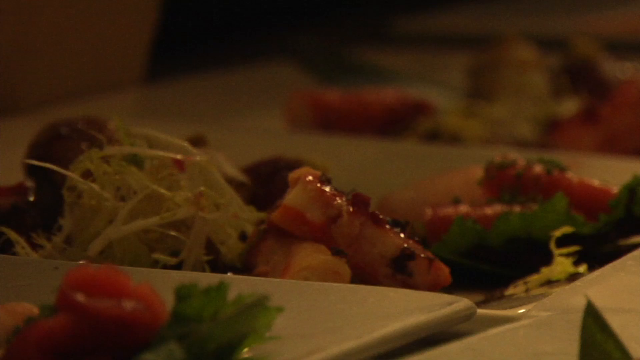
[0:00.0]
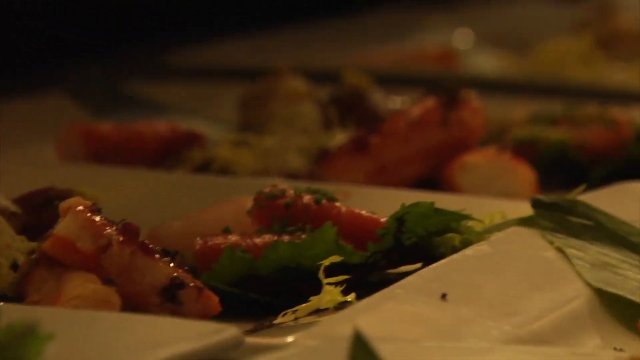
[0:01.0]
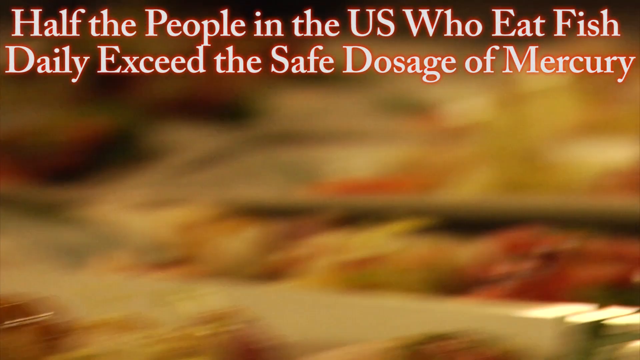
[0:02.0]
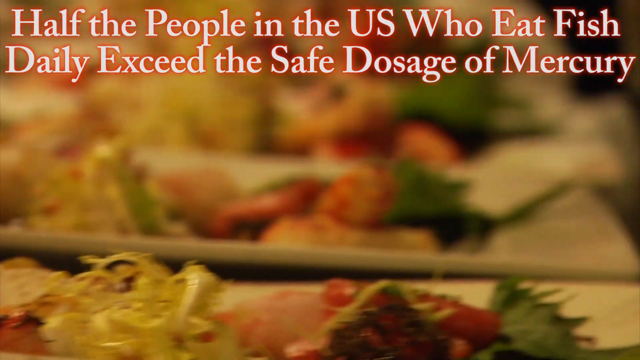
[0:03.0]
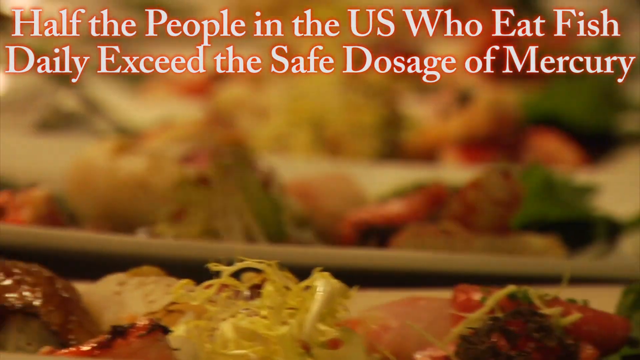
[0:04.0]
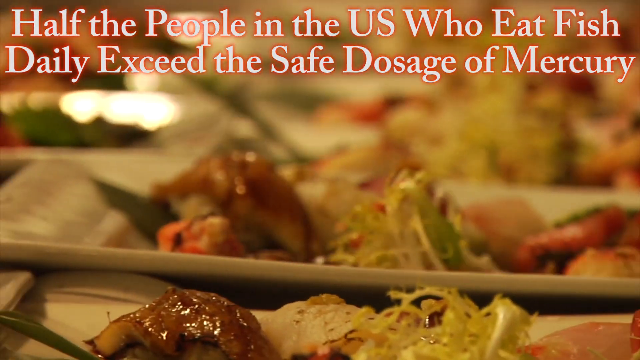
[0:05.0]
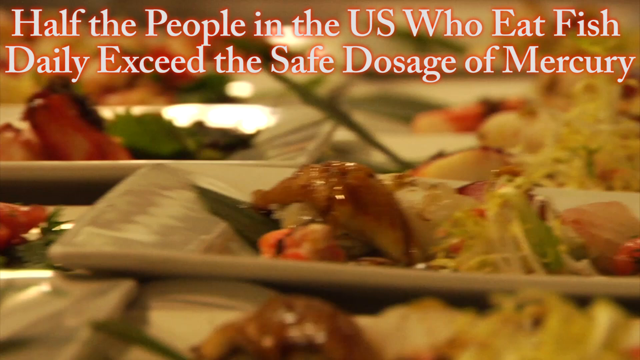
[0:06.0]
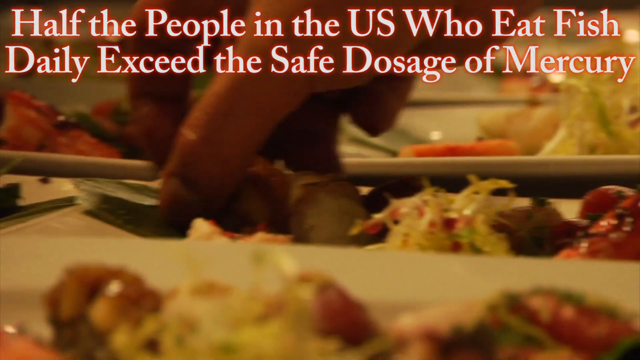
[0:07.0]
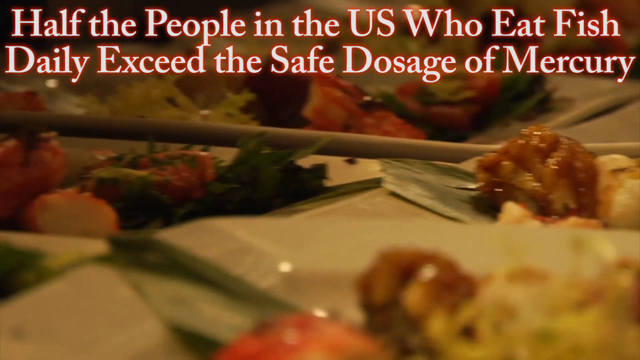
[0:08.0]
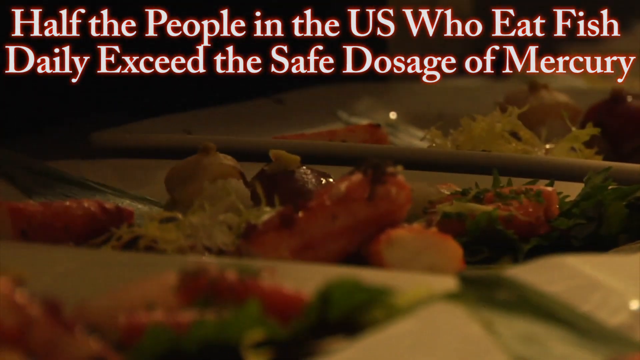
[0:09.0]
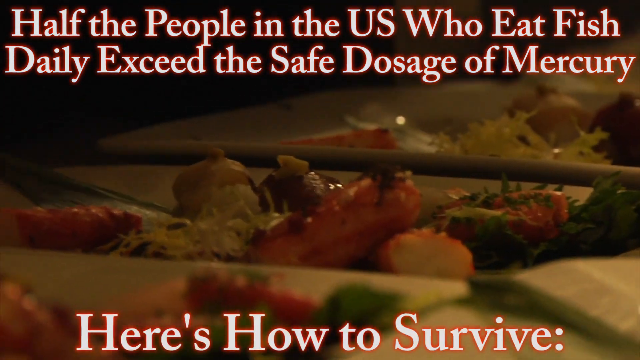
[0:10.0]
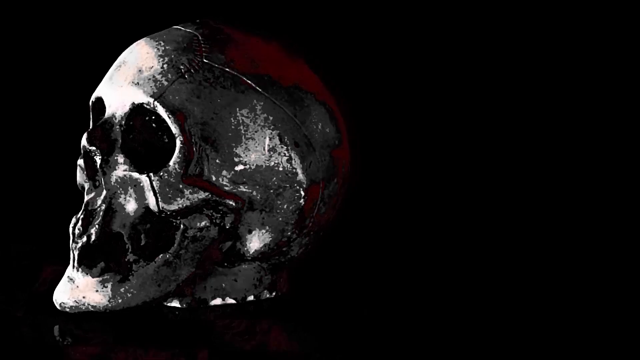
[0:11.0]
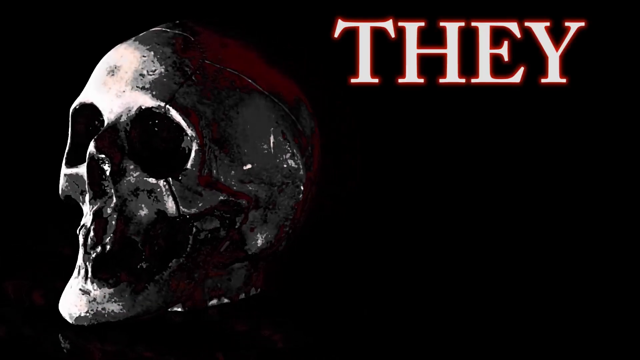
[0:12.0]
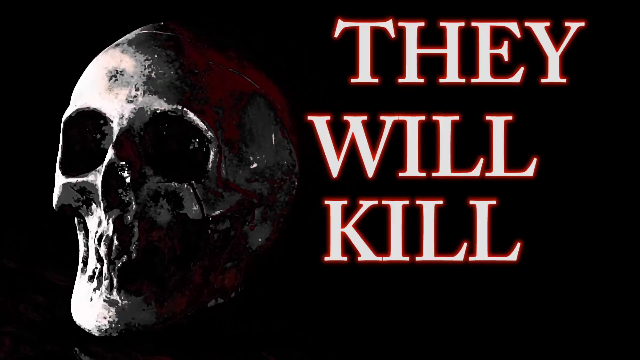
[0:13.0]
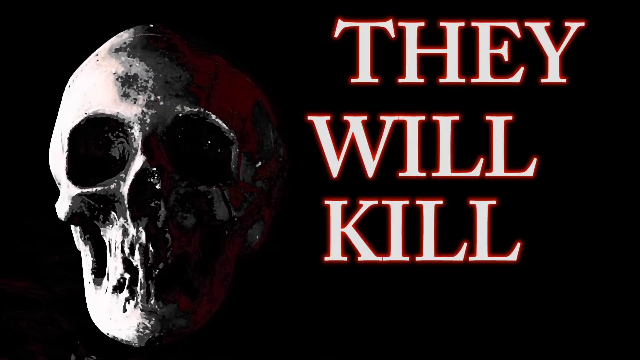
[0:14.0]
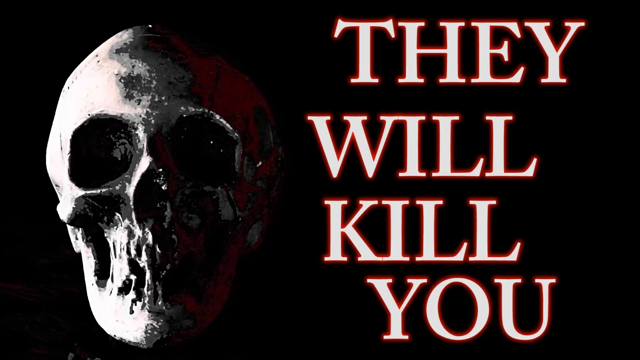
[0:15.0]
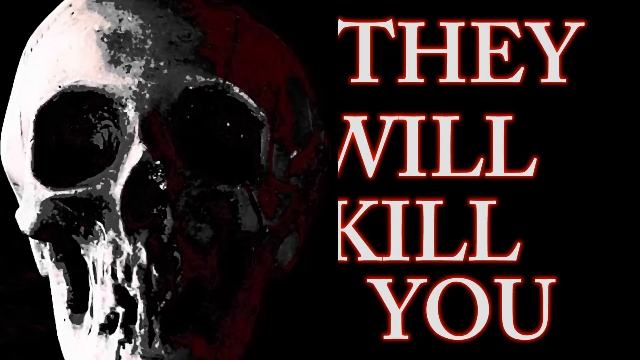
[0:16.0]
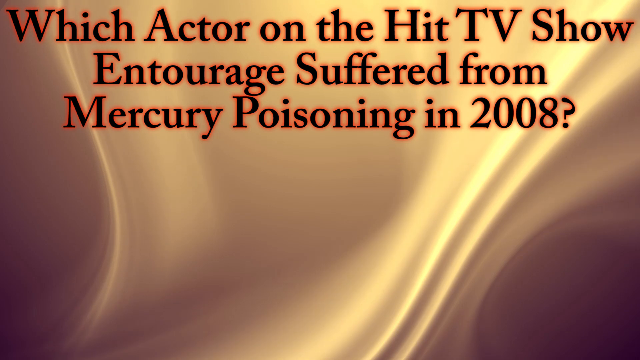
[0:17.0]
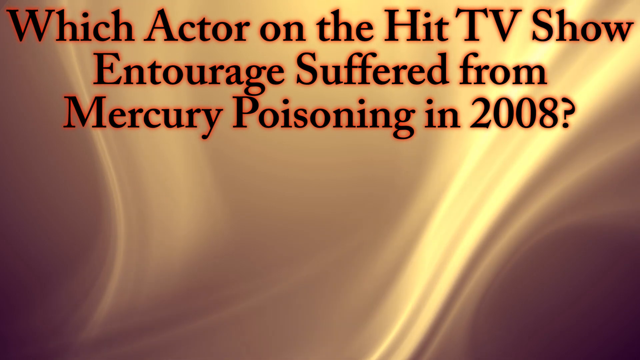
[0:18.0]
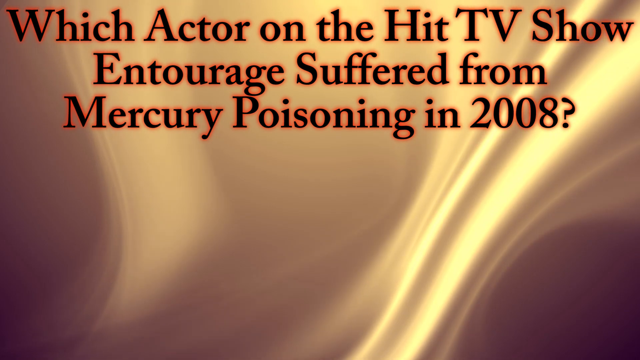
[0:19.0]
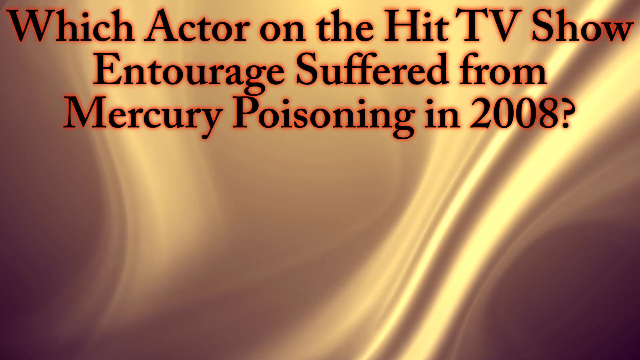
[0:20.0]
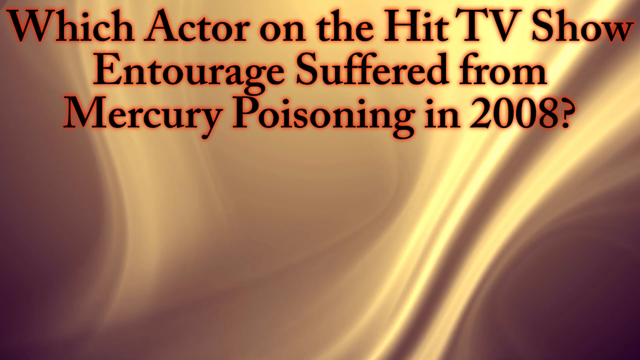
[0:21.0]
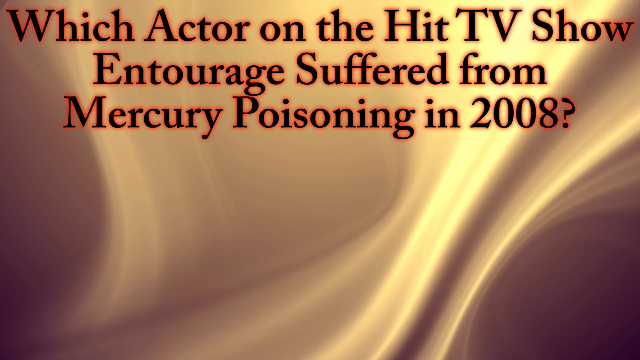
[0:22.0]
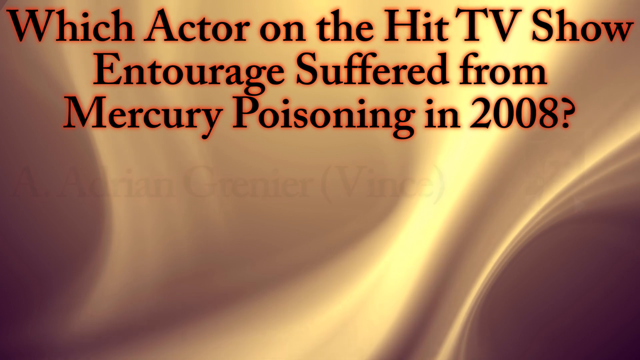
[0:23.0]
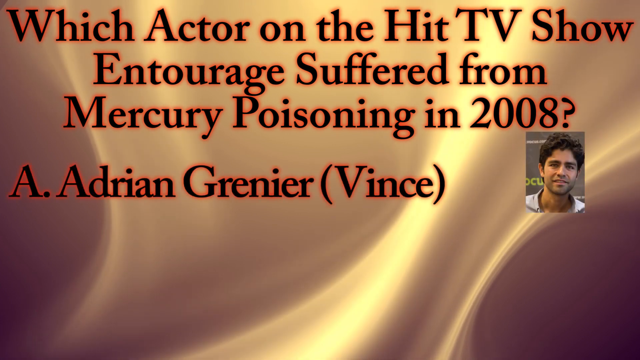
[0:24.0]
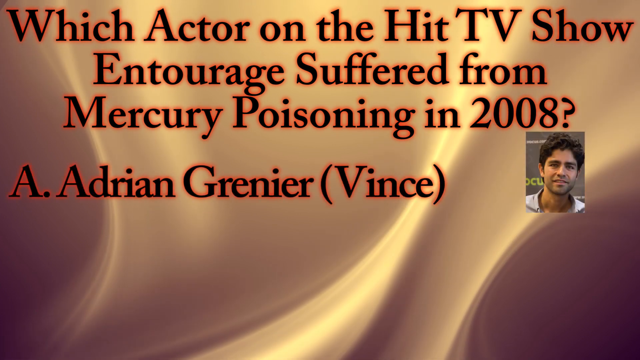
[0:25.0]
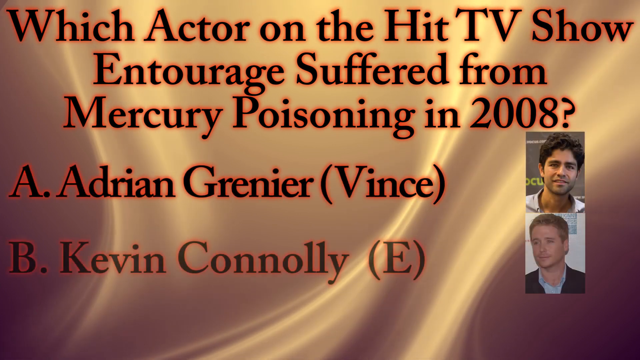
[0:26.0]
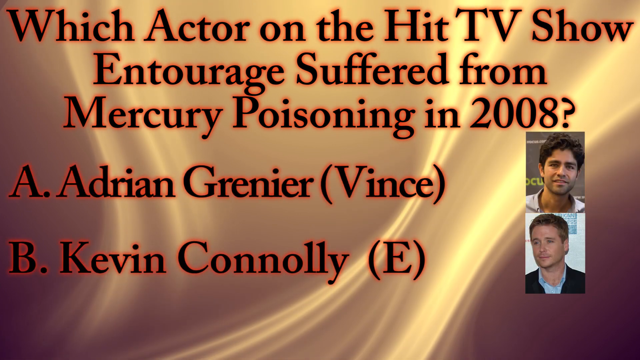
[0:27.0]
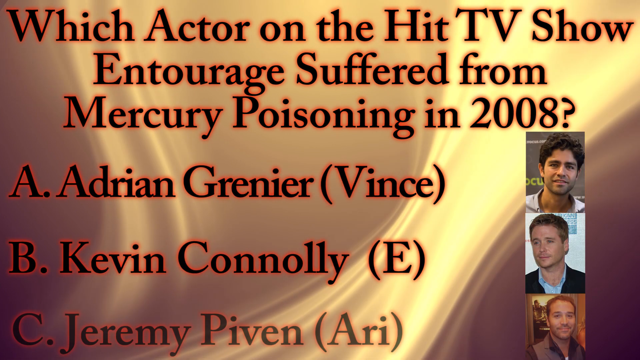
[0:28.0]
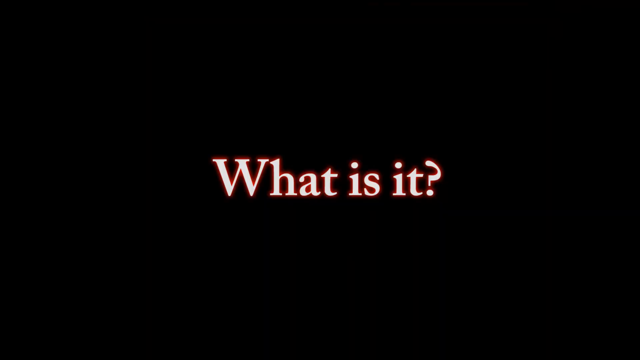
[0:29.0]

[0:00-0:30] The video shows footage of food that looks very delicious. Someone pets what looks like a portion of fish, and as the video goes on, a skeleton appears.